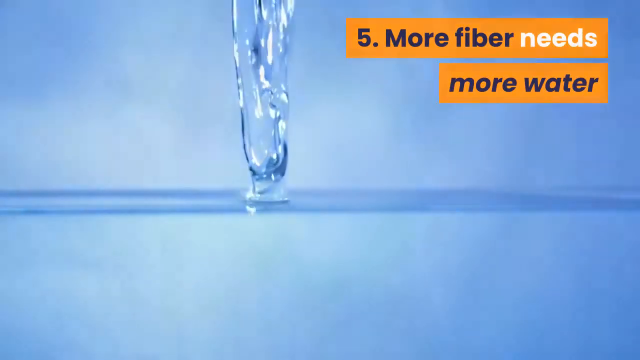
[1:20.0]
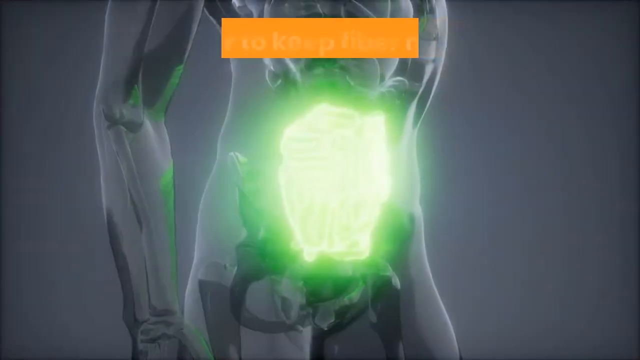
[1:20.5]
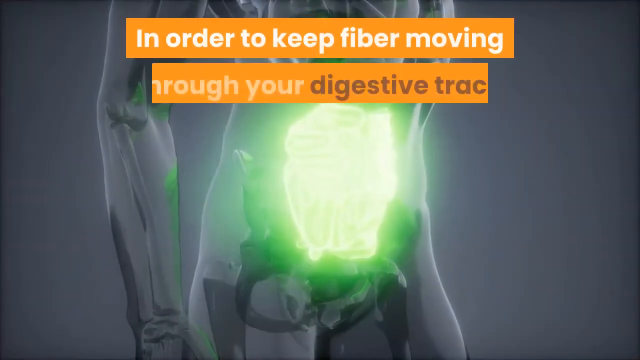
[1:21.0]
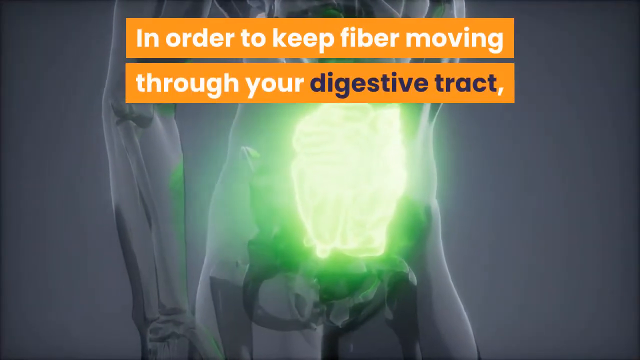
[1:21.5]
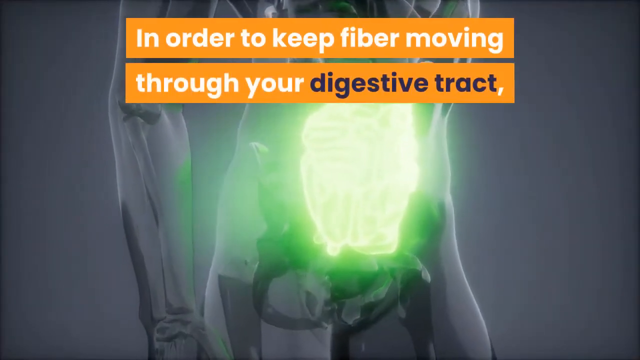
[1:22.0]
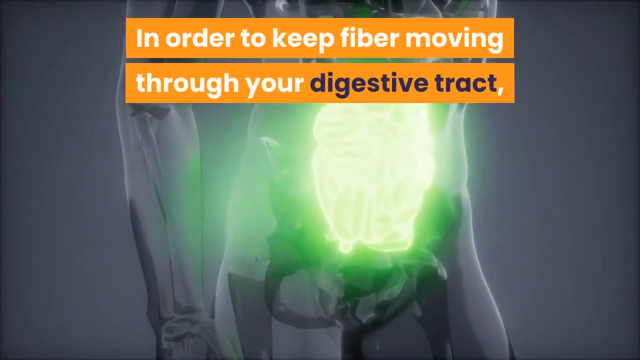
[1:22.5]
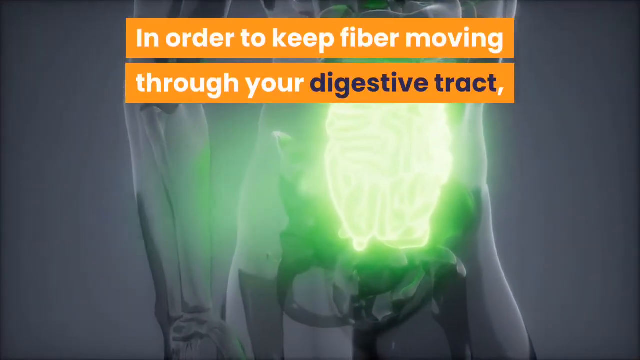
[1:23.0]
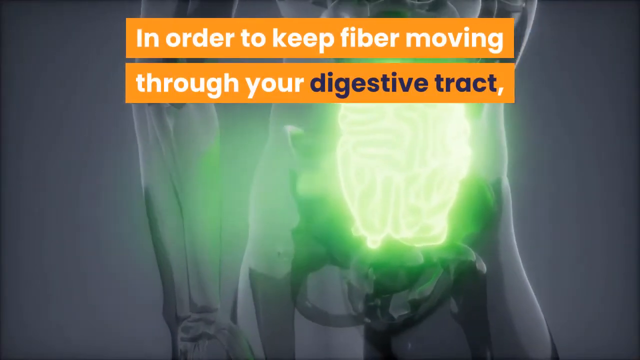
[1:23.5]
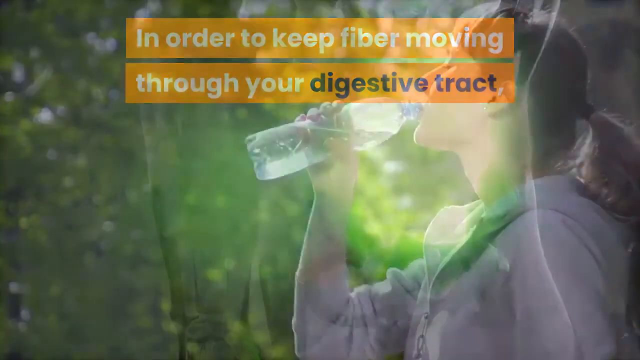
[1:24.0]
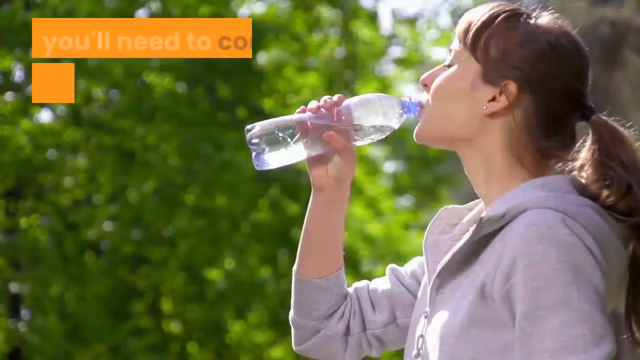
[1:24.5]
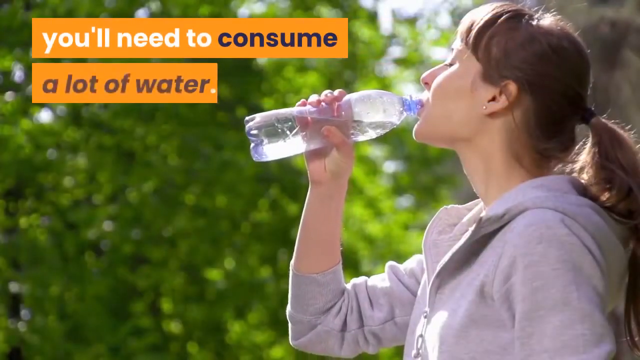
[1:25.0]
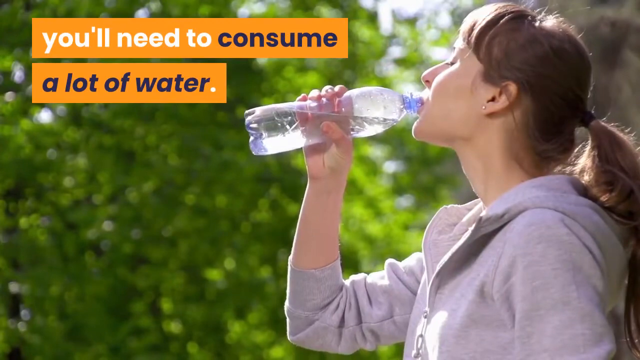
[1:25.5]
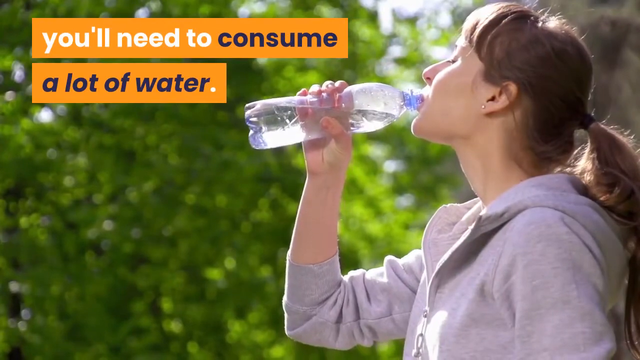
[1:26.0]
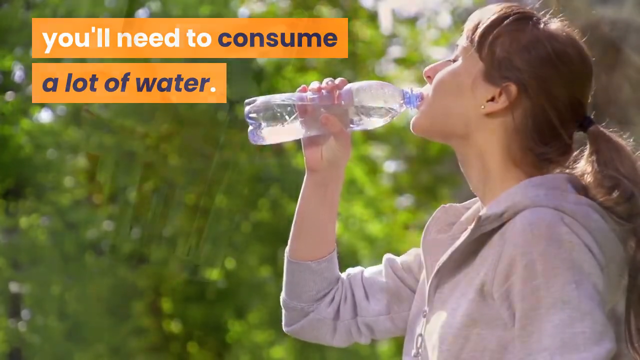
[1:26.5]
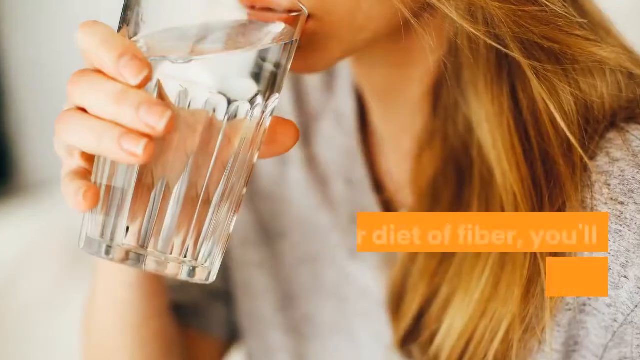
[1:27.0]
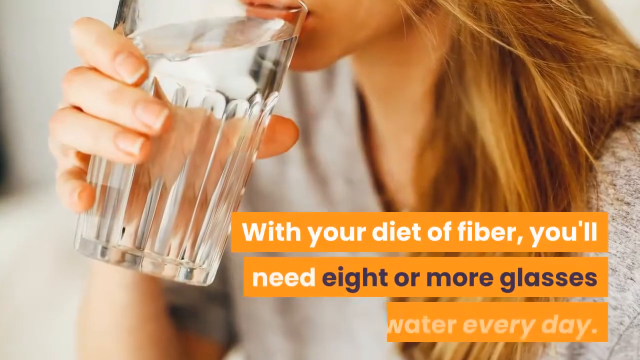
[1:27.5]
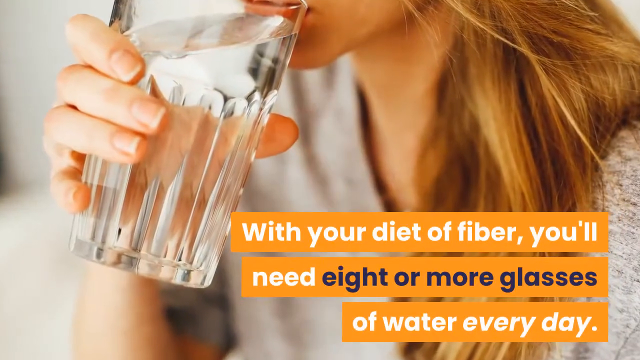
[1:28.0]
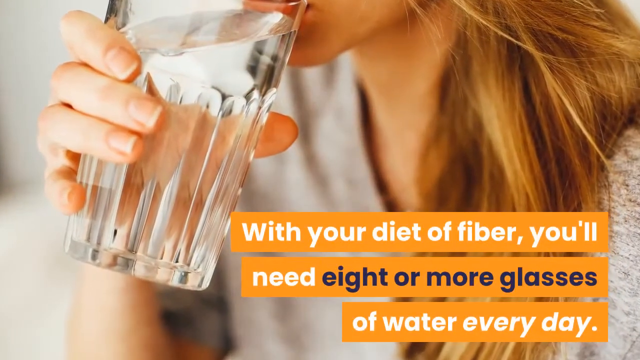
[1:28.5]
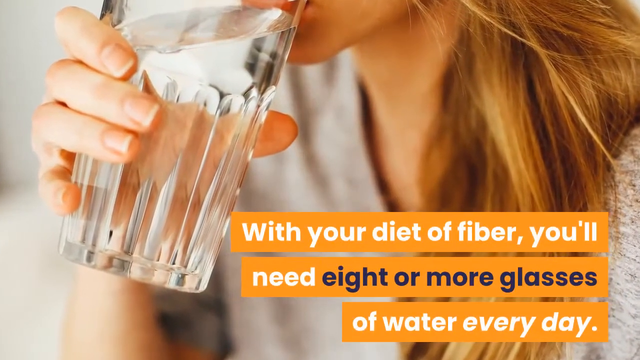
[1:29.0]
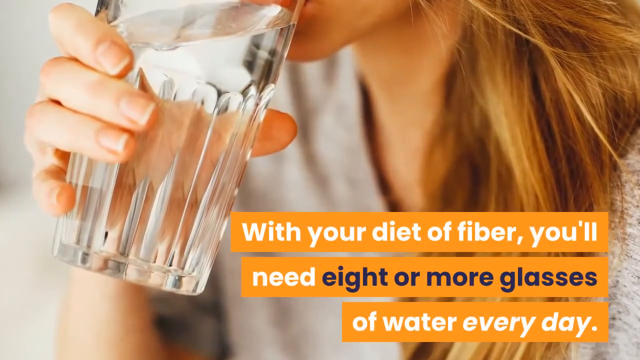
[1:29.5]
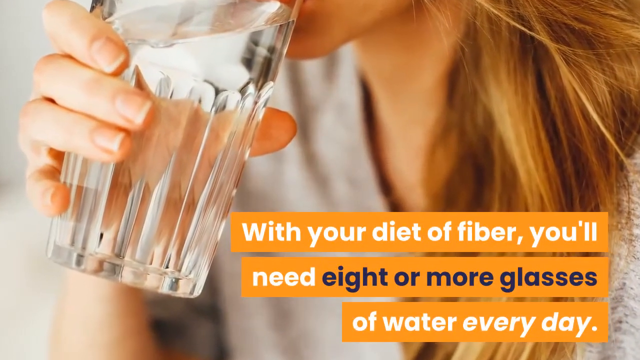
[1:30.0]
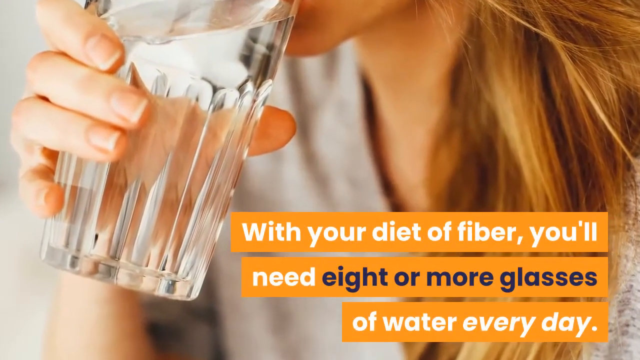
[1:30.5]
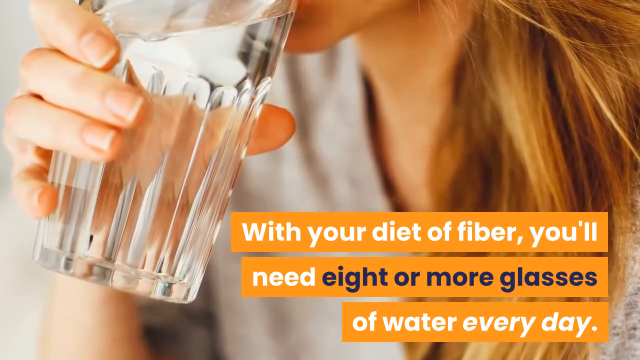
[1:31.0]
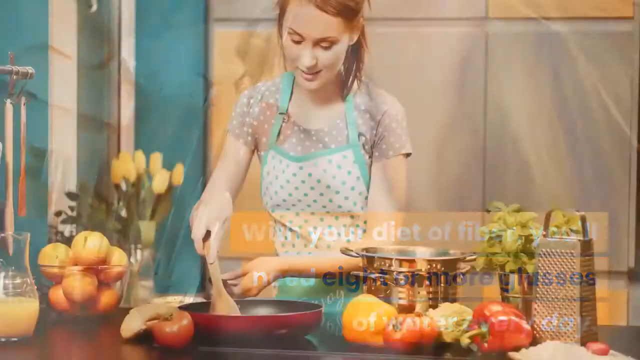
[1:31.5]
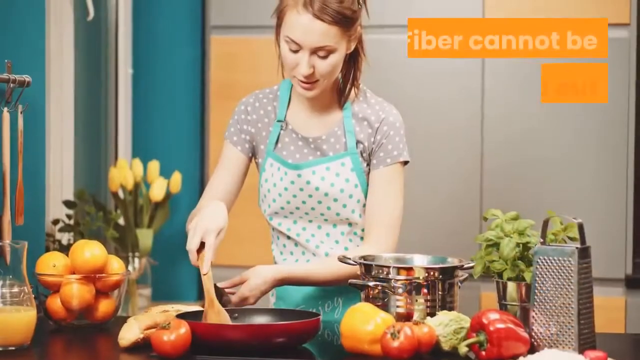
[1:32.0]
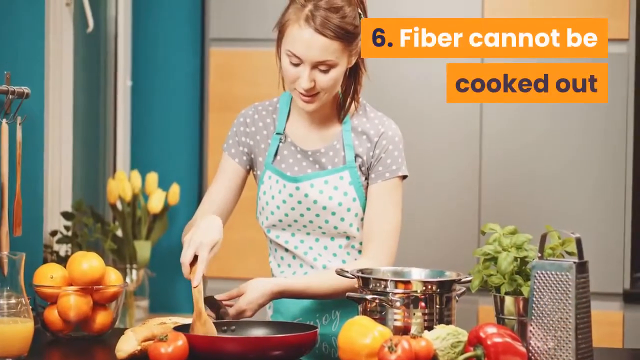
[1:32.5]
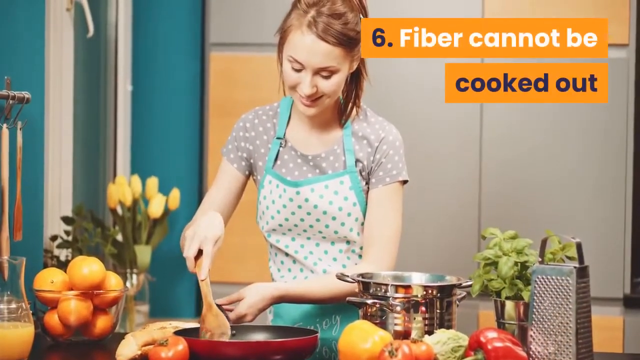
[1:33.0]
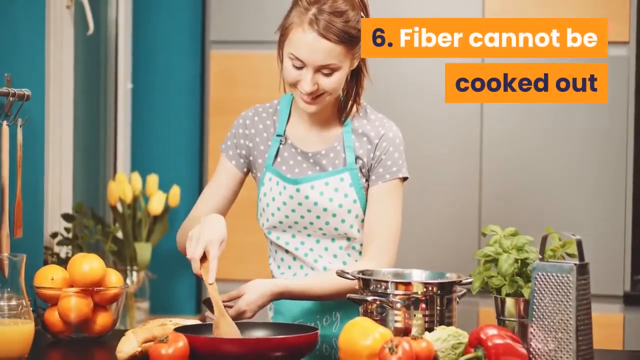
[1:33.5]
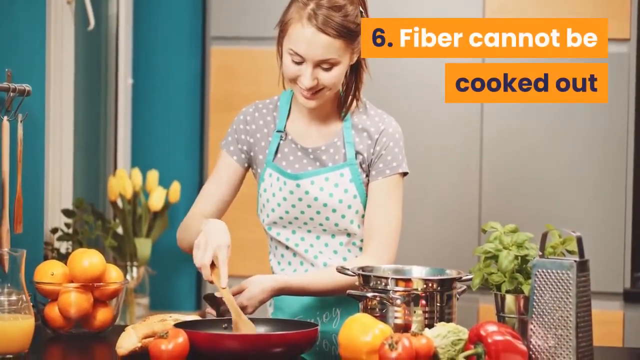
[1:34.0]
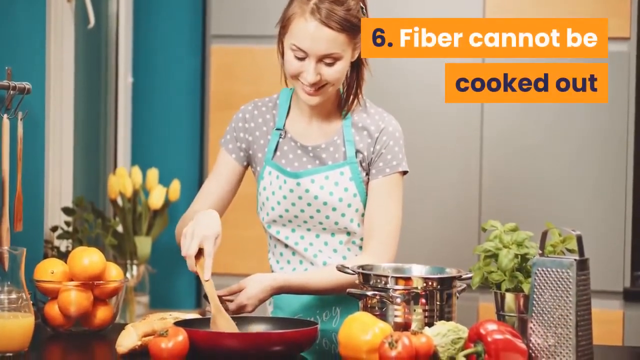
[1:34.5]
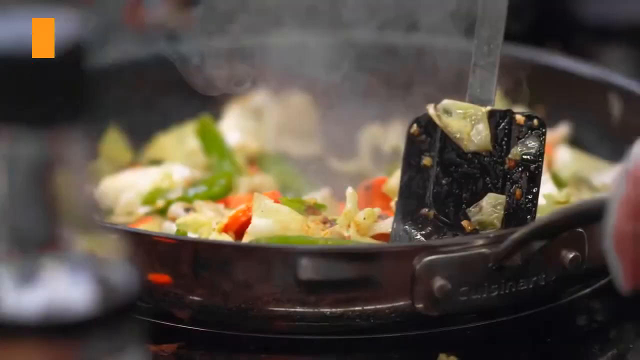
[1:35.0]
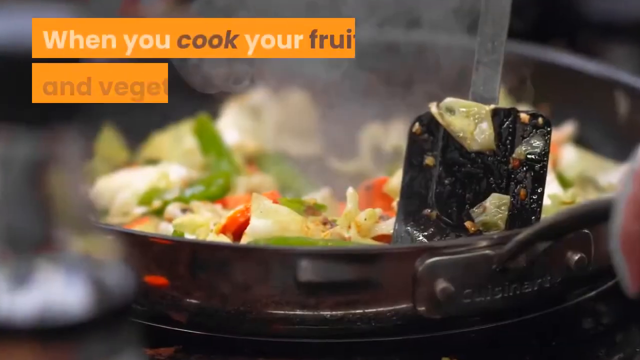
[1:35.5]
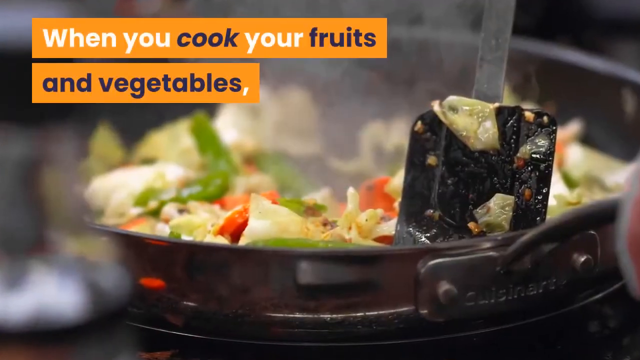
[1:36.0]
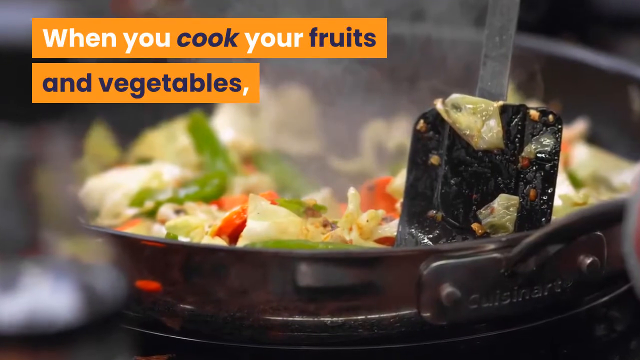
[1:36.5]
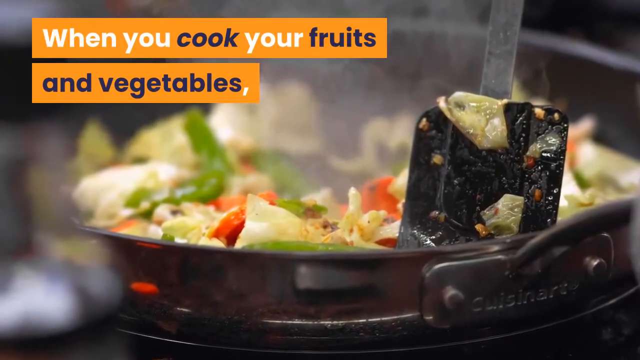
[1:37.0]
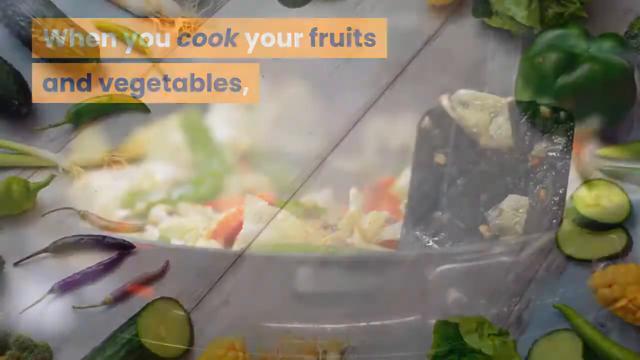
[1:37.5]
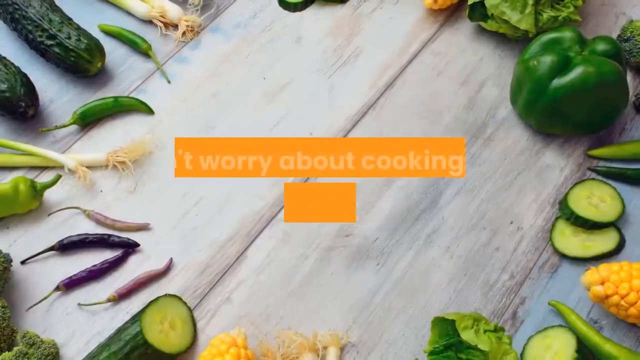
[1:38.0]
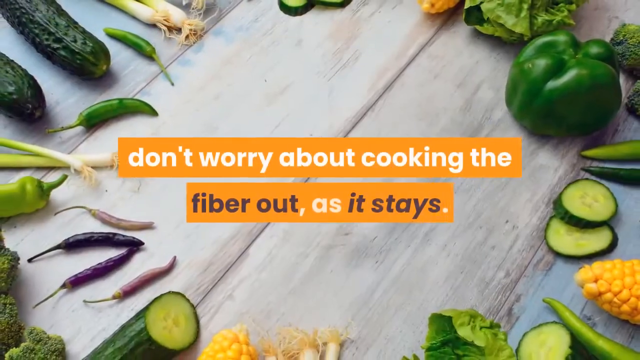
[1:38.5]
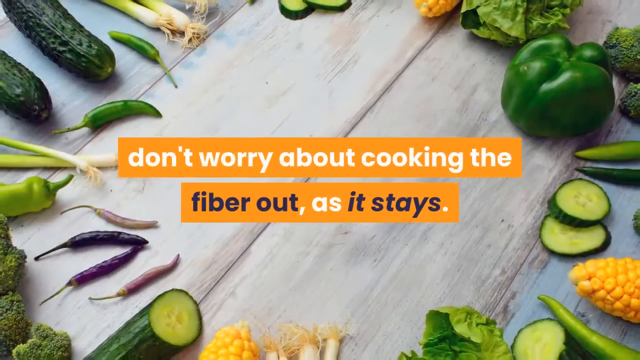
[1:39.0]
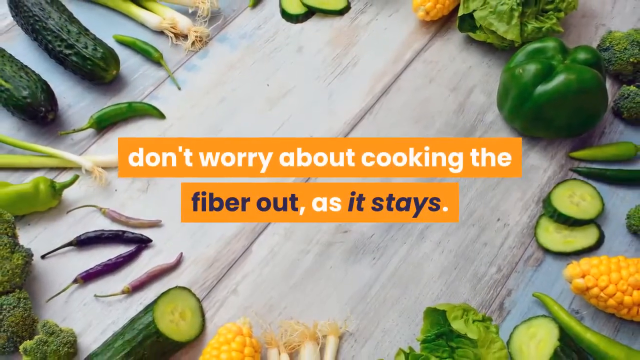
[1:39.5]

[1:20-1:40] A pool of water appears with water being poured into it. The title screen reads "More fiber needs more water." It cuts to a person's digestive system seen through an x-ray, with a glowing part. The text reads "In order to keep fiber moving through your digestive tract, you'll need to consume a lot of water," over visuals and photos of women drinking glasses and bottles of water. Then the text reads "With your diet of fiber, you'll need eight or more glasses of water every day." A video shows a woman cooking some kind of meal, with the text "Fiber cannot be cooked out," followed by "When you cook your fruits and vegetables, don't worry about cooking the fiber out as it stays in it."